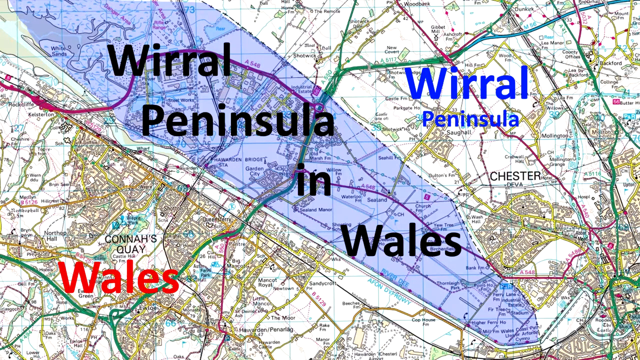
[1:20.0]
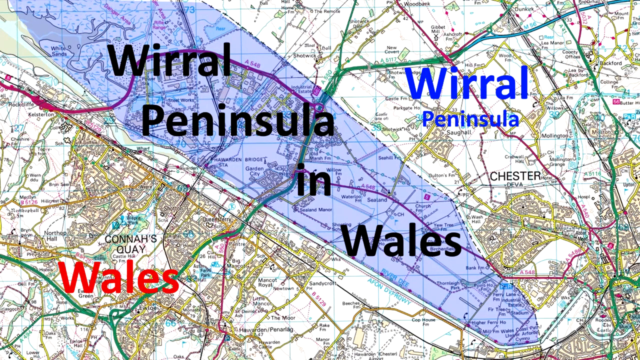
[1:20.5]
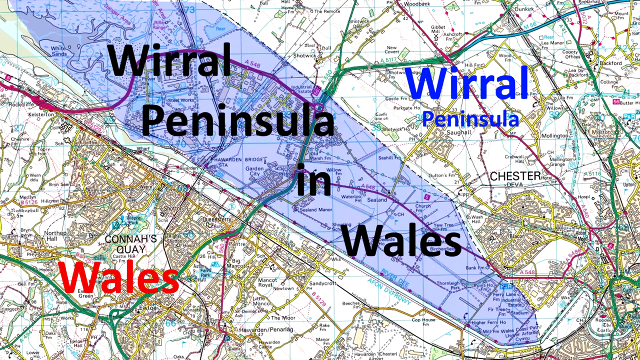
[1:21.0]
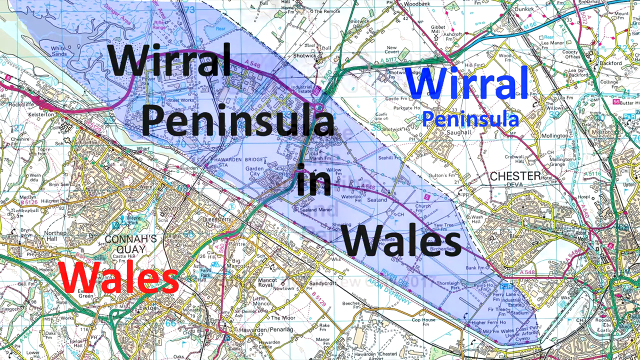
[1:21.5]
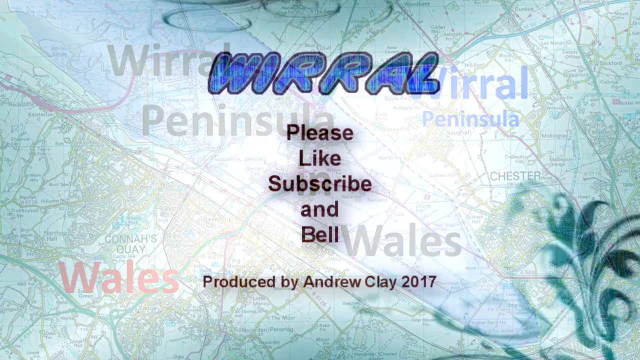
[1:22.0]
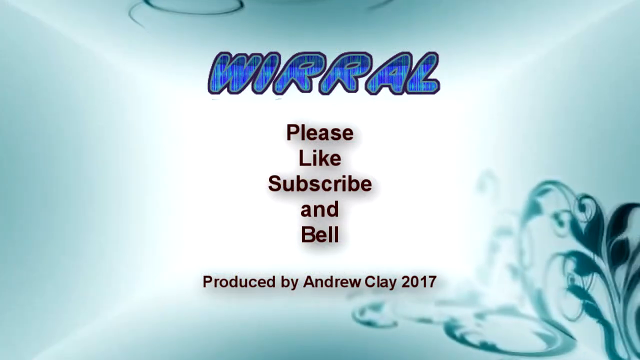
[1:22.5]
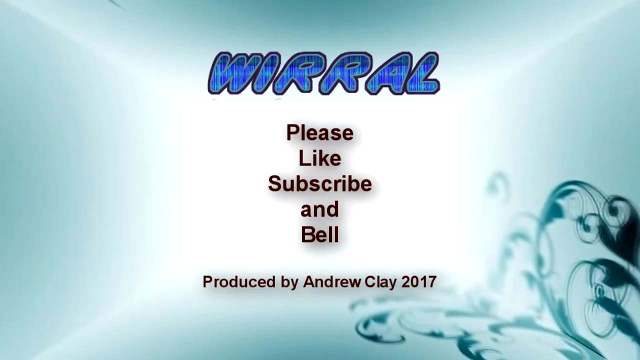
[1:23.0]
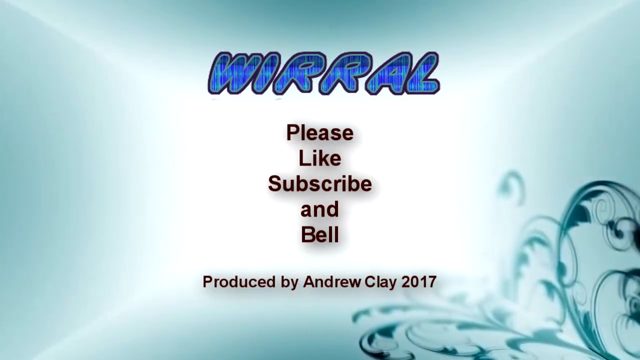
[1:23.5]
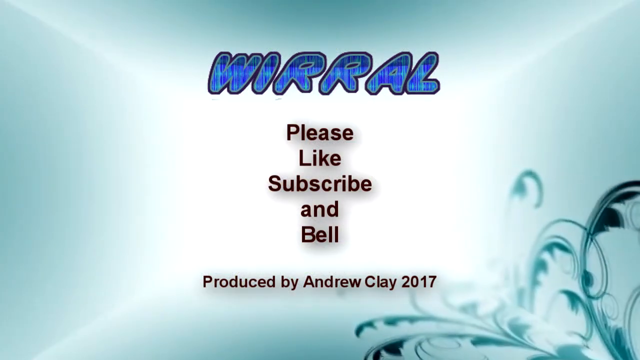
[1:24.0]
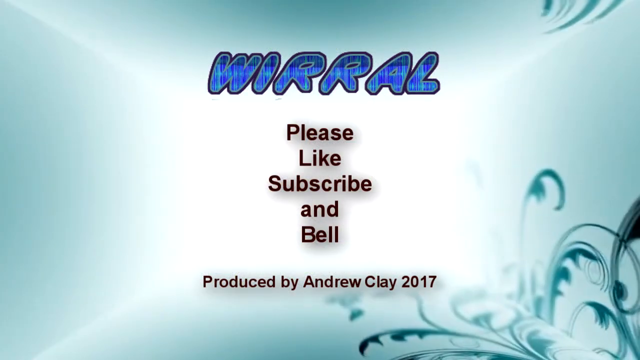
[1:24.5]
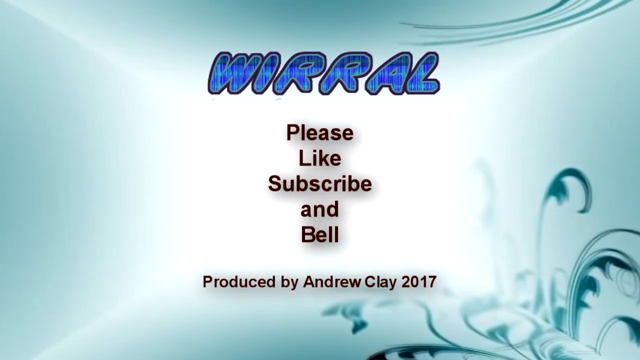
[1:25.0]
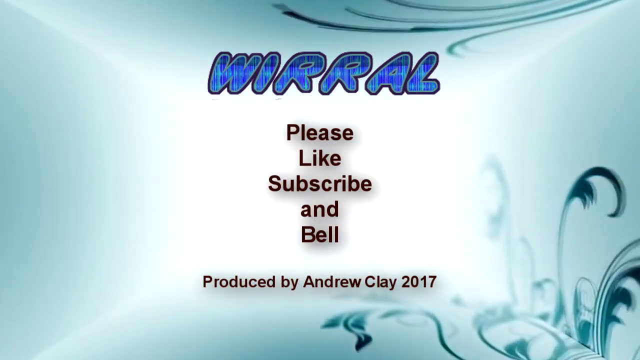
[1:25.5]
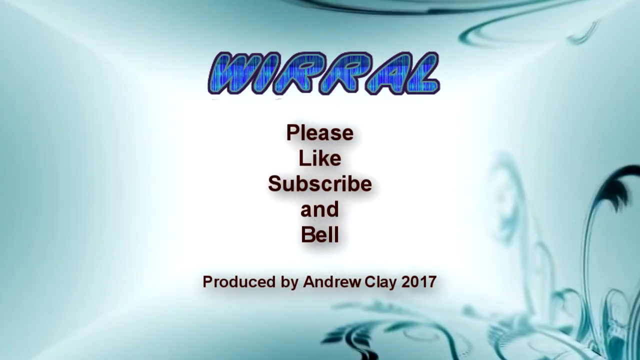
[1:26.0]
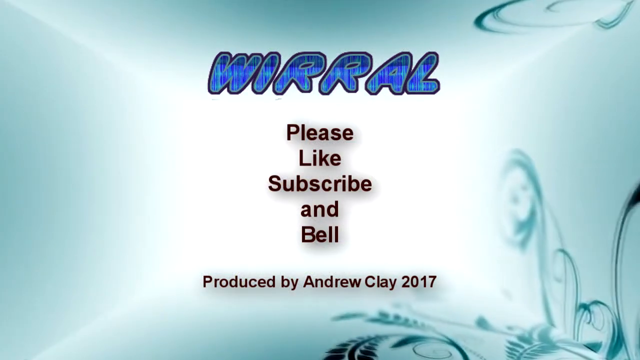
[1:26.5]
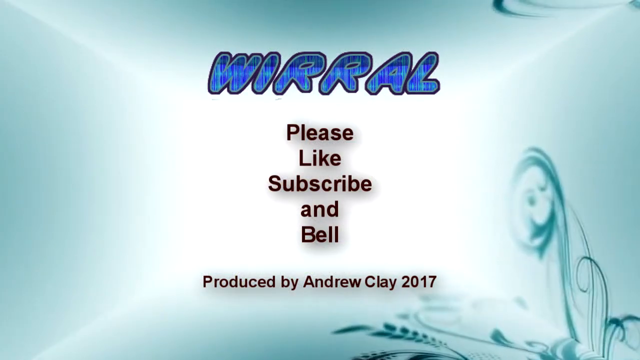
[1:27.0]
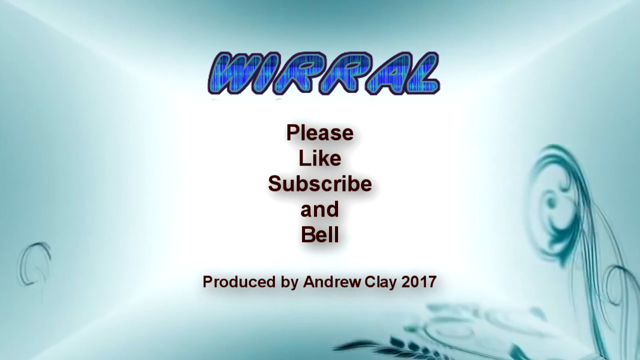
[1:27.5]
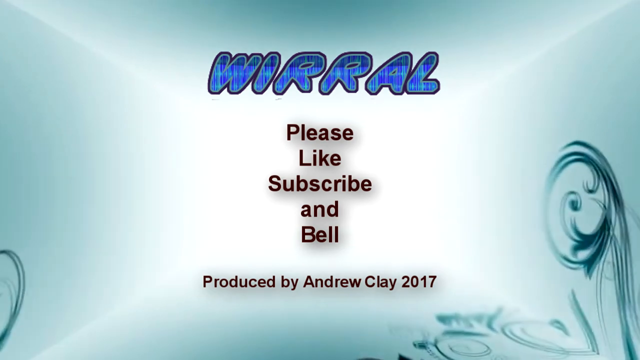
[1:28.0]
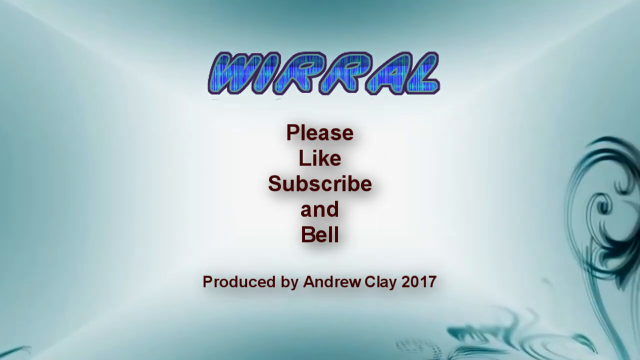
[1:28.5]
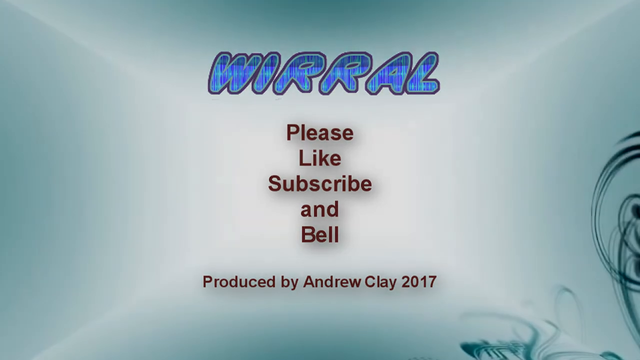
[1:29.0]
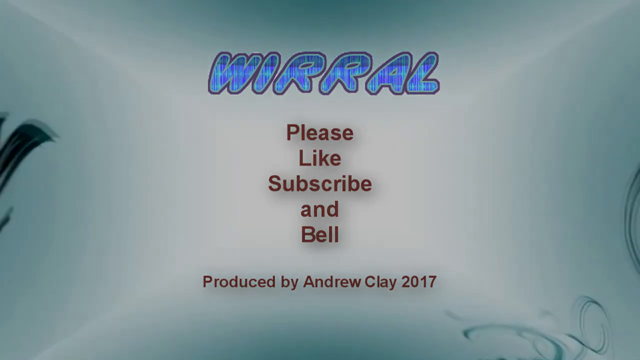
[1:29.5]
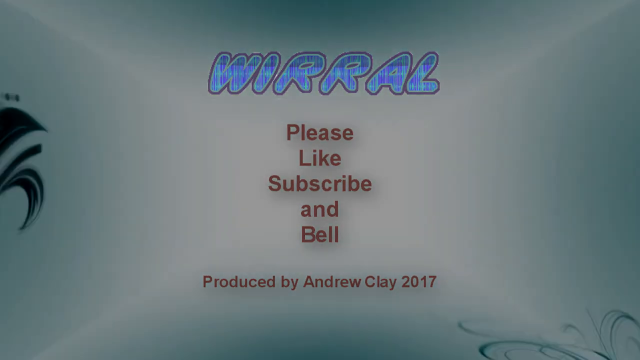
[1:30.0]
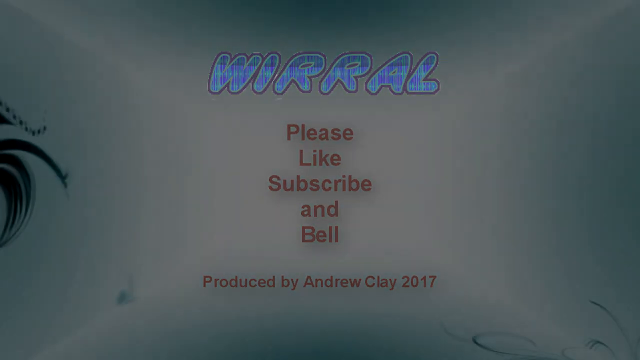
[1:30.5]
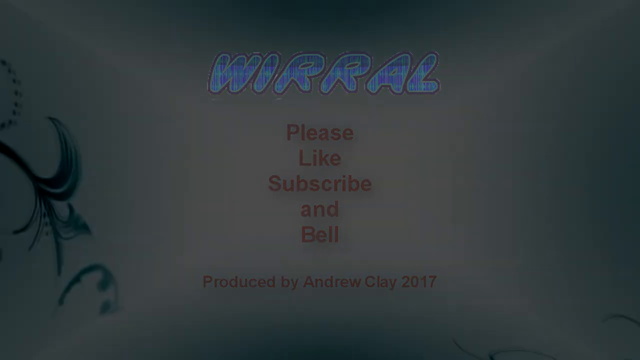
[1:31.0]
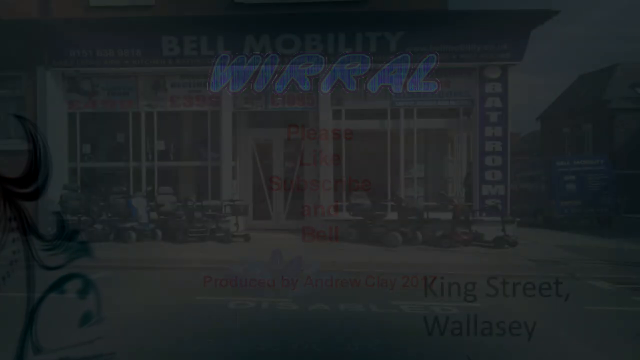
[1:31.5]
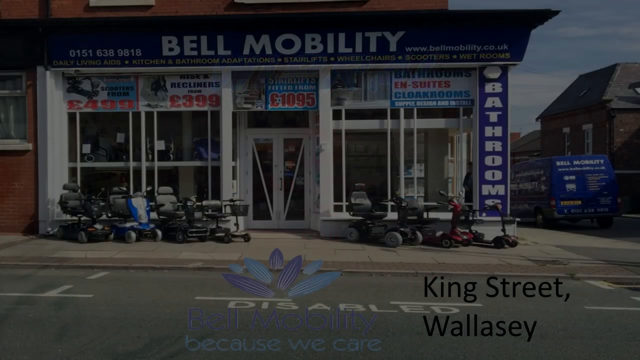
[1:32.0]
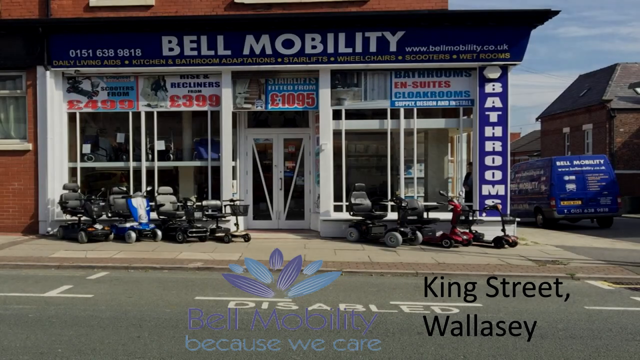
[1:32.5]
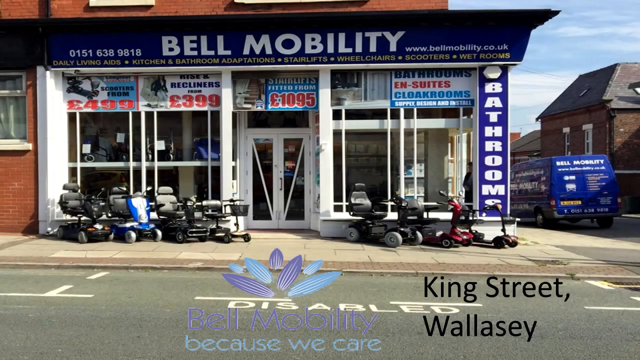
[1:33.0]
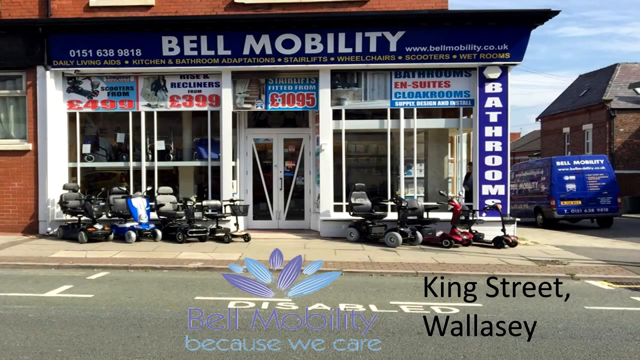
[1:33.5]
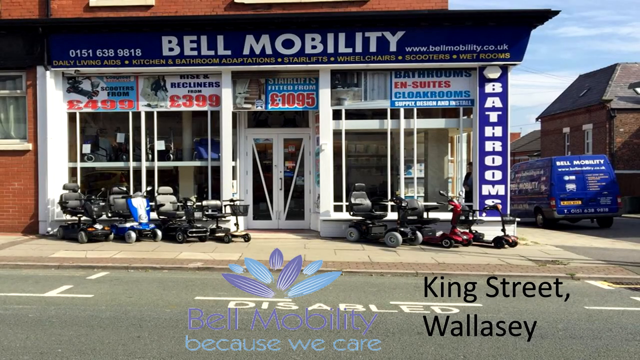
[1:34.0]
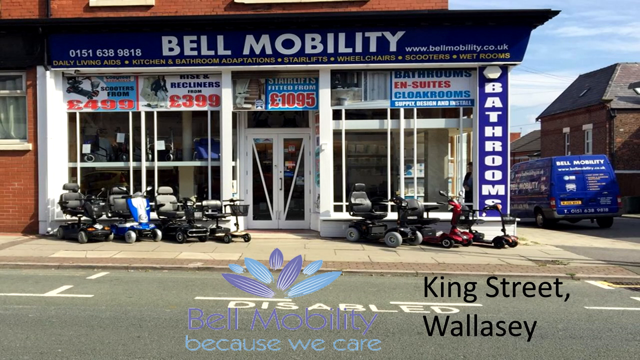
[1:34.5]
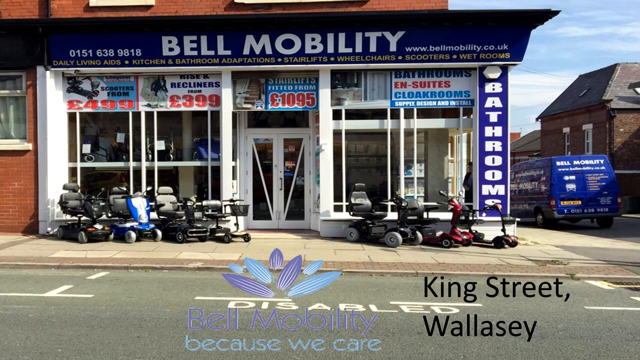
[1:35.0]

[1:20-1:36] The zoomed-in map shows Connors Quay of Wales on the left and the Wirral Peninsula and Chester on the right. Between them is a shaded blue area and part of the River Dee, though the map is so small and detailed that it is difficult to make out. The blue area is labelled "Wirral Peninsula in Wales". The video then changes to another still screen: a light blue background fading to a bright white square in the middle. At the top is the heading "WIRRAL" in darker blue type, and underneath it reads "PLEASE LIKE, SUBSCRIBE and BELL" and "produced by Andrew Clay 2017". Next, the camera zooms through what appears to be a tunnel-type animated drawing, passing what seem to be individual peacock feathers on the right, like graffiti on a wall. The screen fades to black, and the photograph of the Bell Mobility shop seen previously returns. The shop is central in the photograph, with a road just in front of it and a phone number for Bell Mobility. It looks like a showroom-type shop, with about seven mobility scooters along the front and a disabled parking spot marked by white lines just outside the shop.